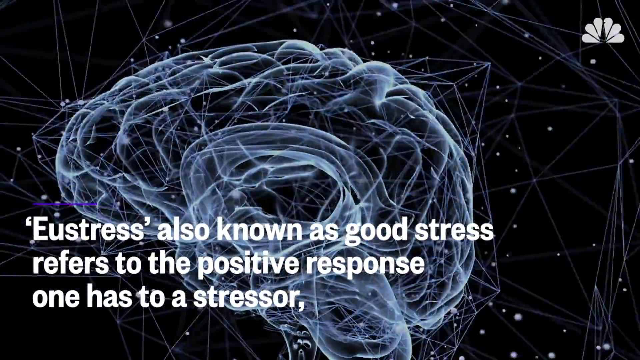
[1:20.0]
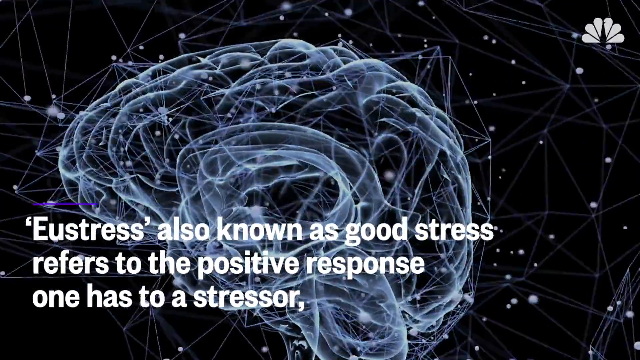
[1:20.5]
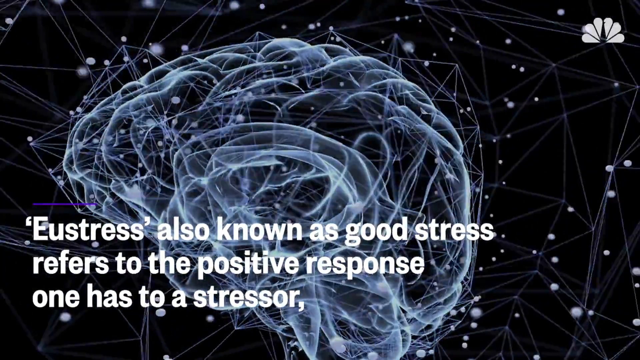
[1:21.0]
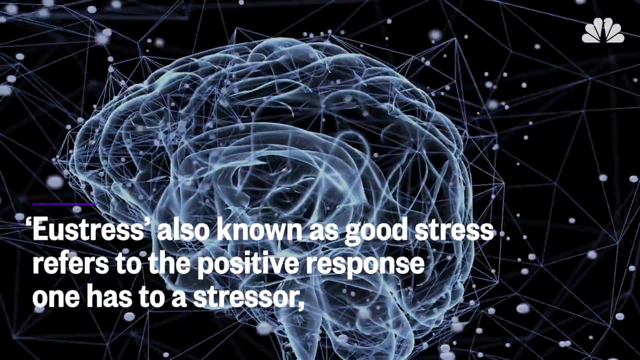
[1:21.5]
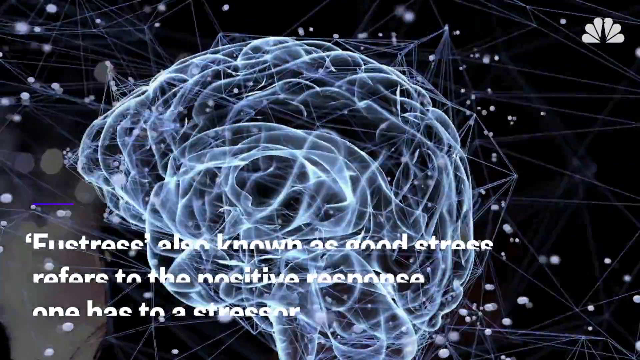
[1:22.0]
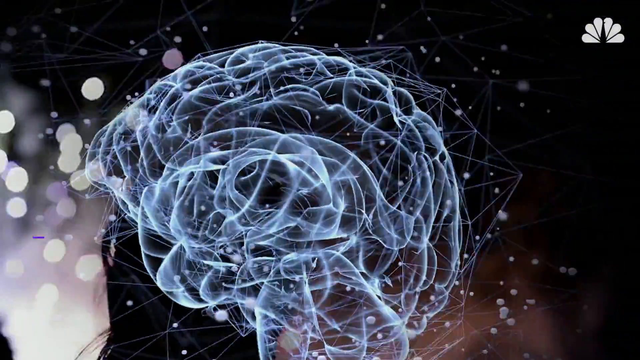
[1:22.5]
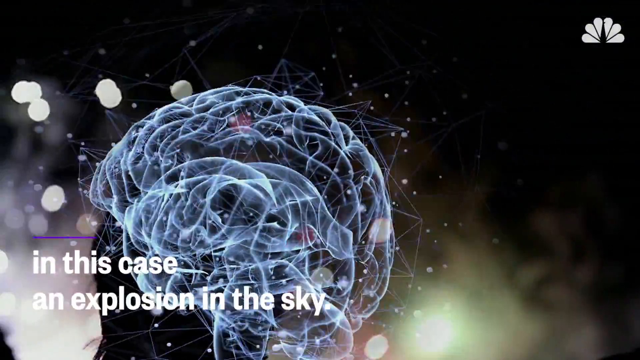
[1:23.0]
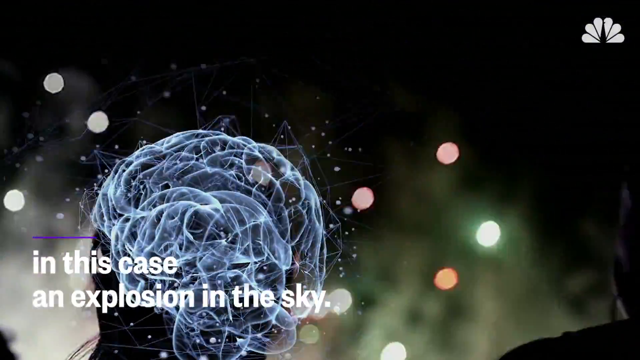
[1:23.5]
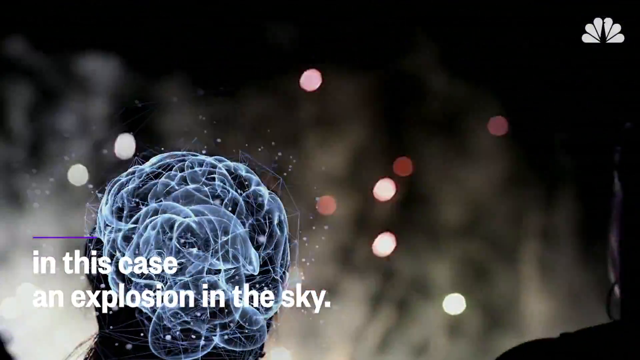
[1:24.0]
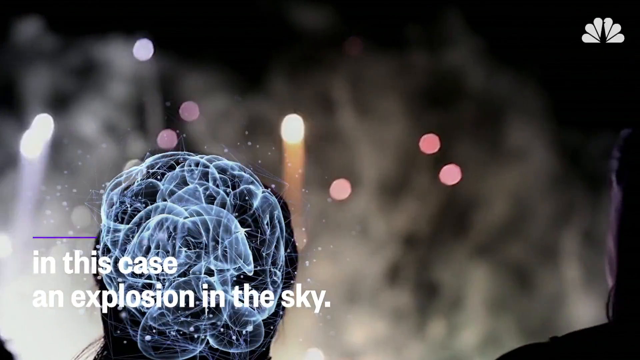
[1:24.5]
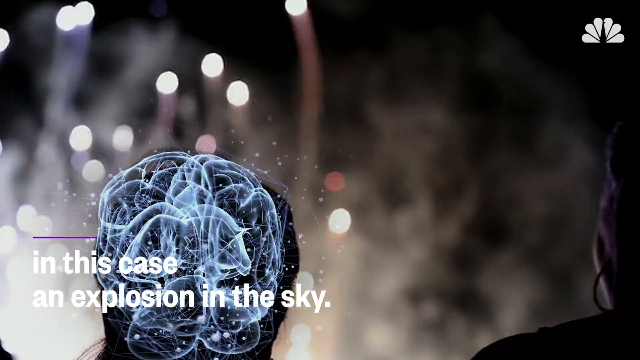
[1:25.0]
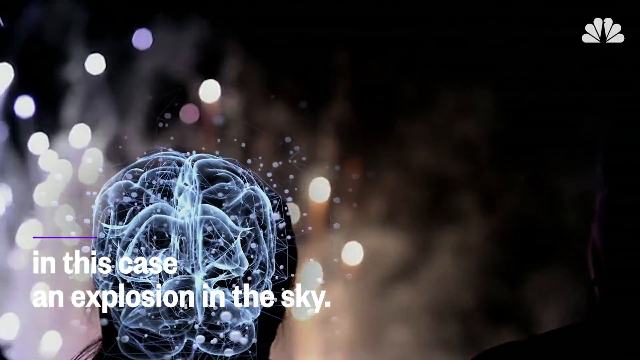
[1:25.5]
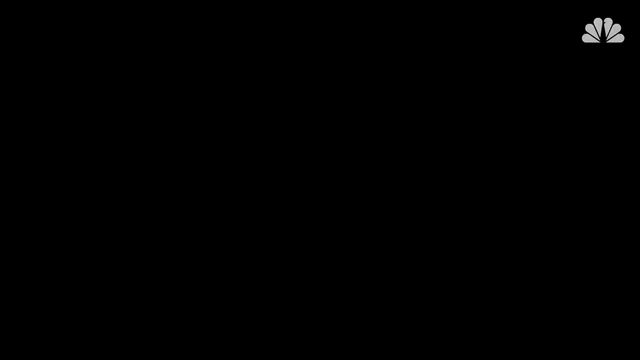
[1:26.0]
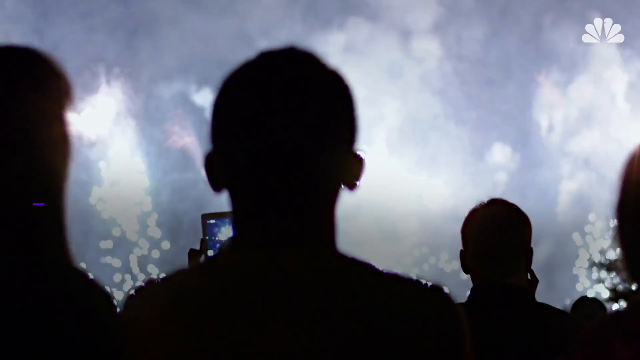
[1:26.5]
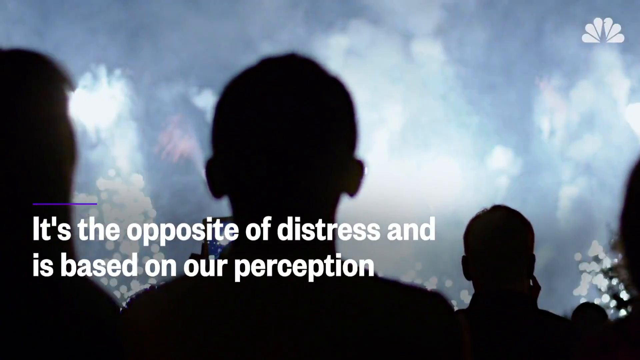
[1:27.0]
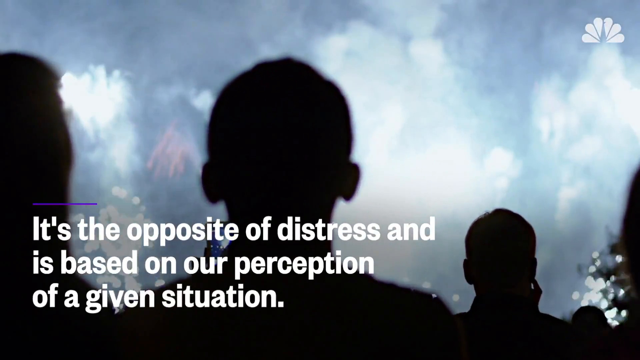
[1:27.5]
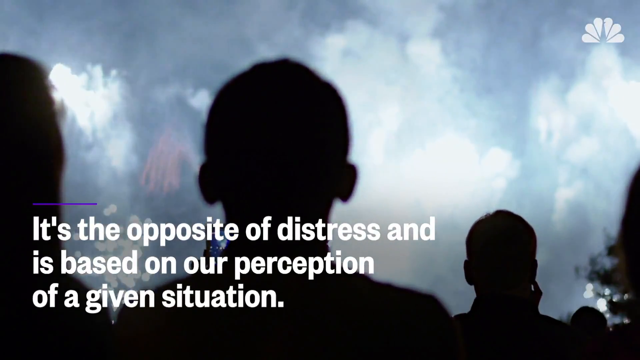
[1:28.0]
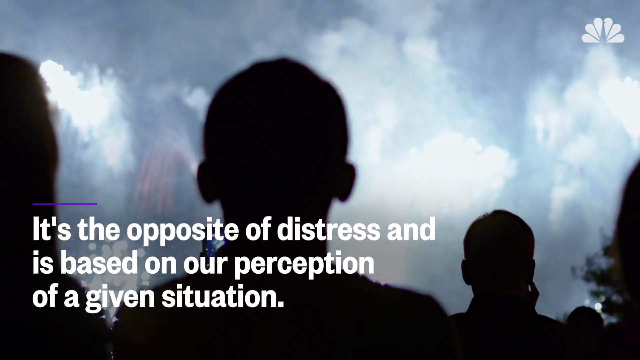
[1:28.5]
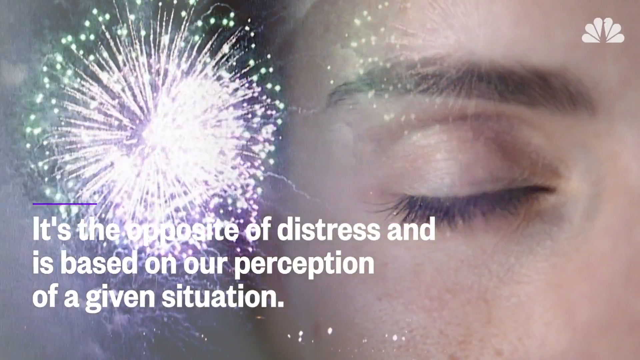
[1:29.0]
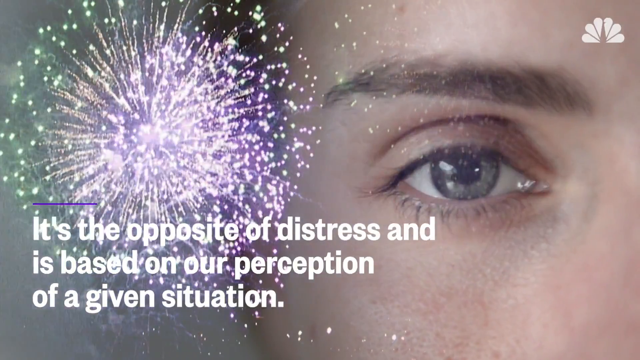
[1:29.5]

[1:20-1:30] Text on the screen says "Eustress also known as good stress refers to the positive response one has to a stressor". In the background is a brain-shaped graphic, which appears to be in the sky, with stars and a dark background behind it. The screen then says "in this case, an explosion in the sky". Further text then appears on the screen, beginning "it's the opposite of".